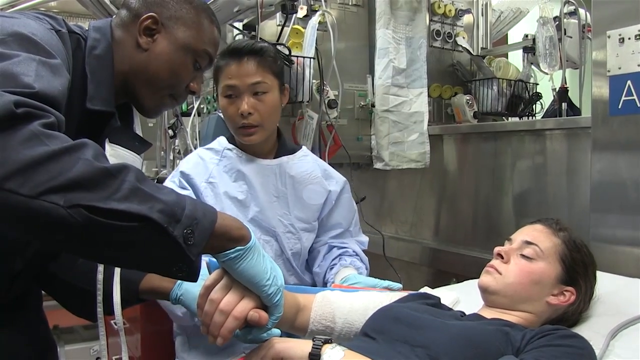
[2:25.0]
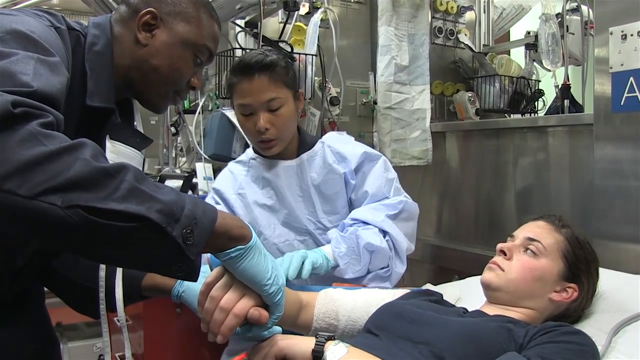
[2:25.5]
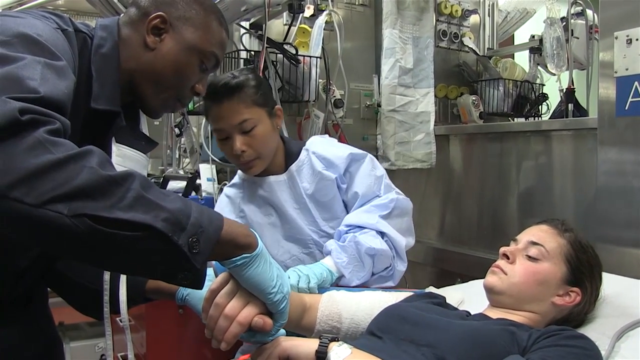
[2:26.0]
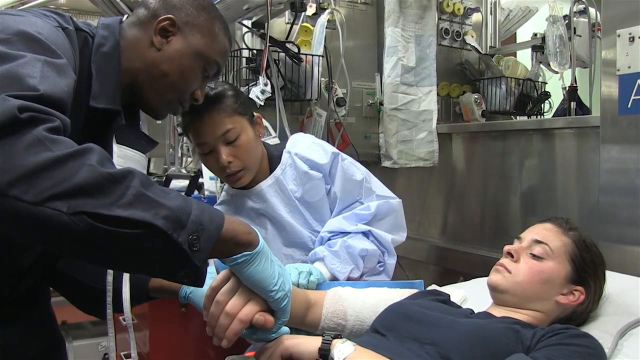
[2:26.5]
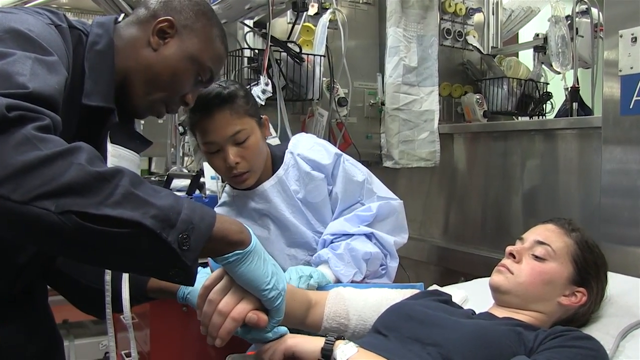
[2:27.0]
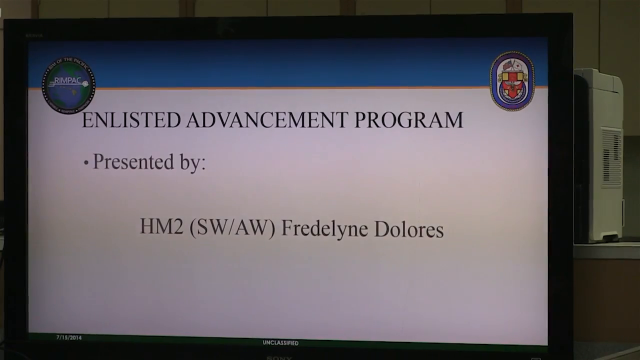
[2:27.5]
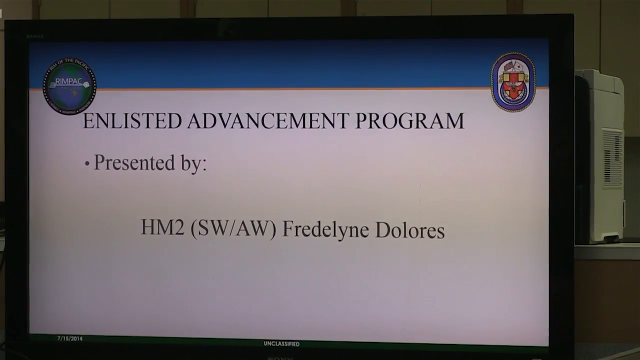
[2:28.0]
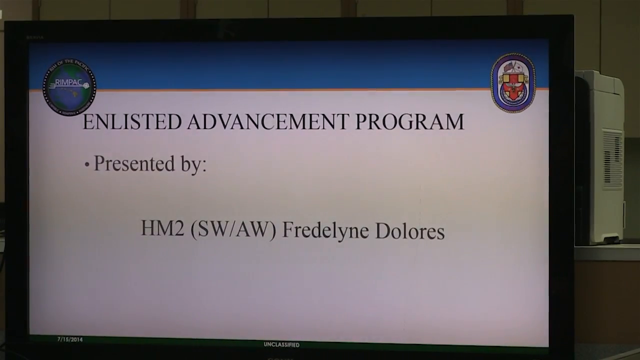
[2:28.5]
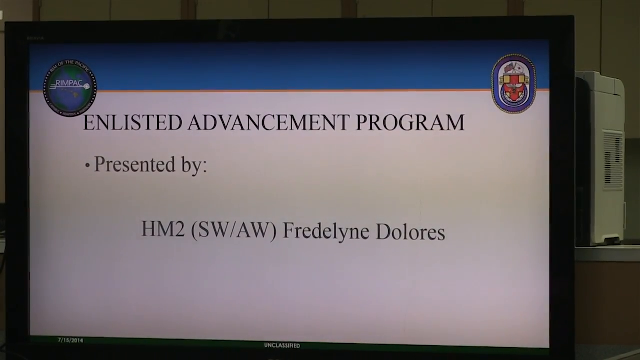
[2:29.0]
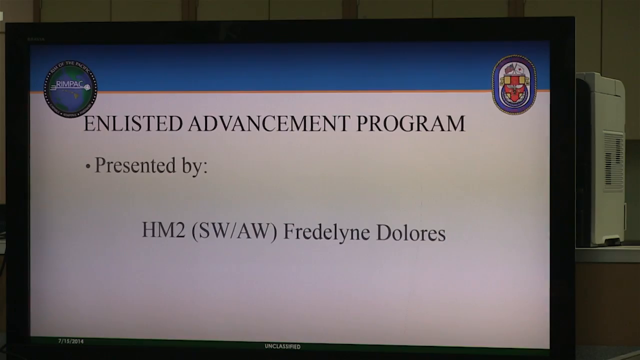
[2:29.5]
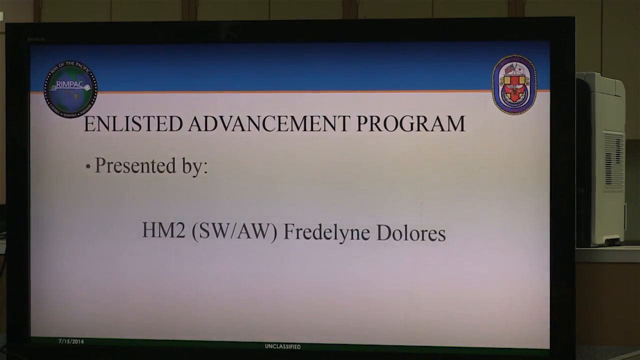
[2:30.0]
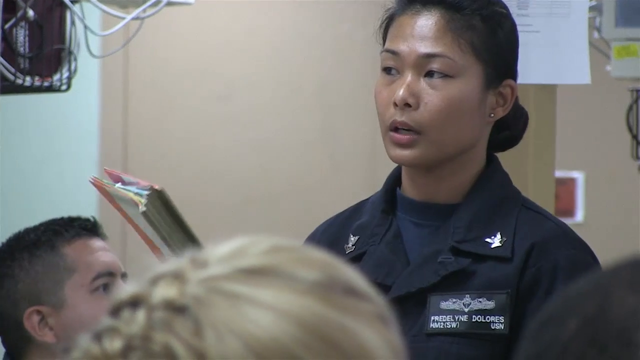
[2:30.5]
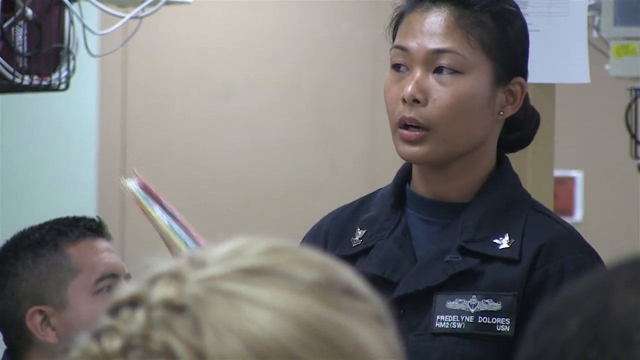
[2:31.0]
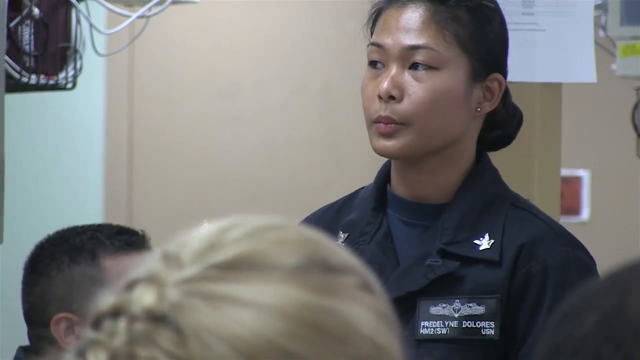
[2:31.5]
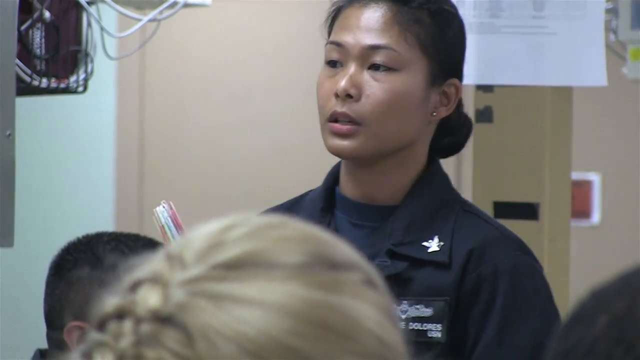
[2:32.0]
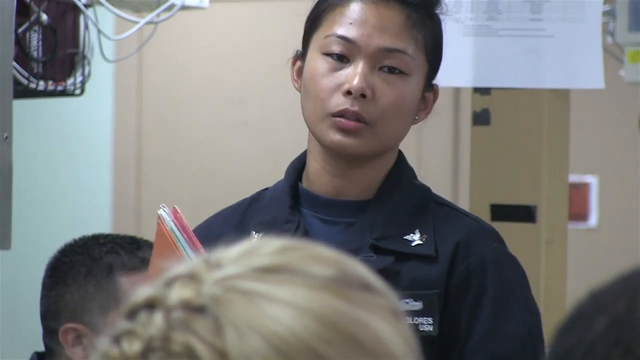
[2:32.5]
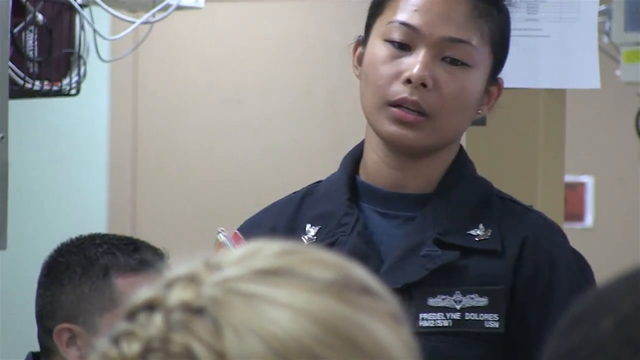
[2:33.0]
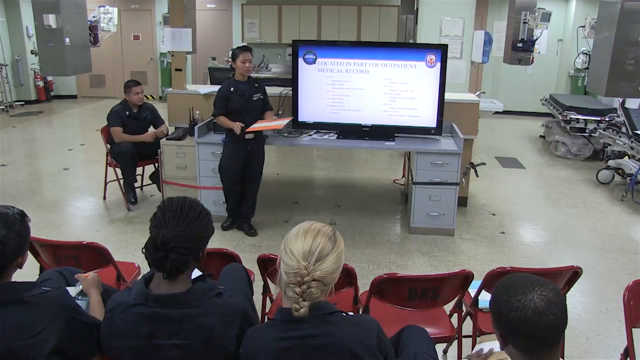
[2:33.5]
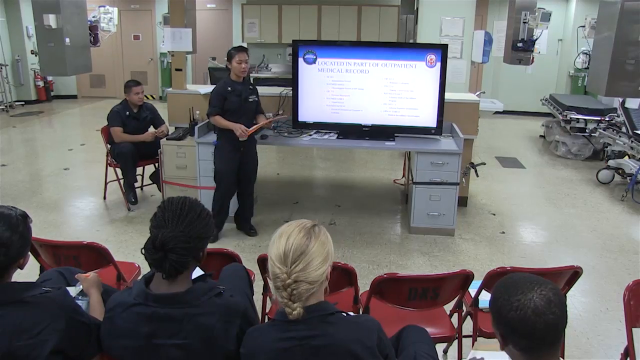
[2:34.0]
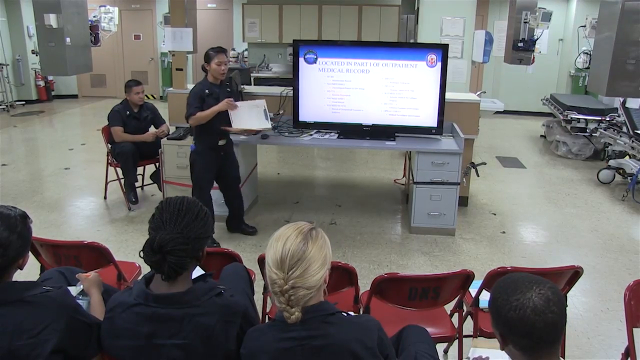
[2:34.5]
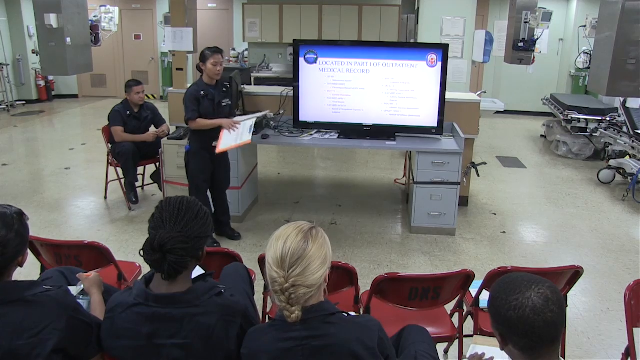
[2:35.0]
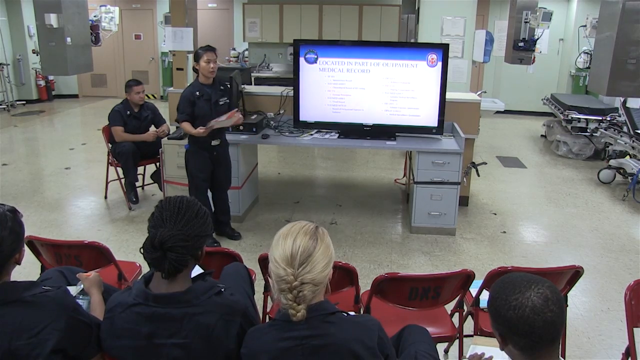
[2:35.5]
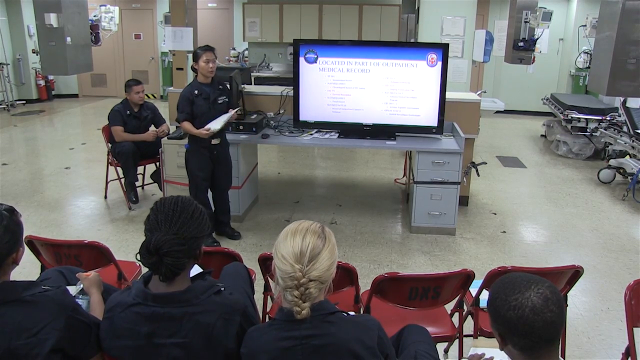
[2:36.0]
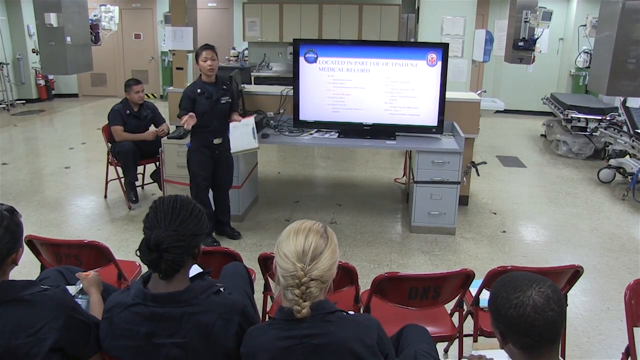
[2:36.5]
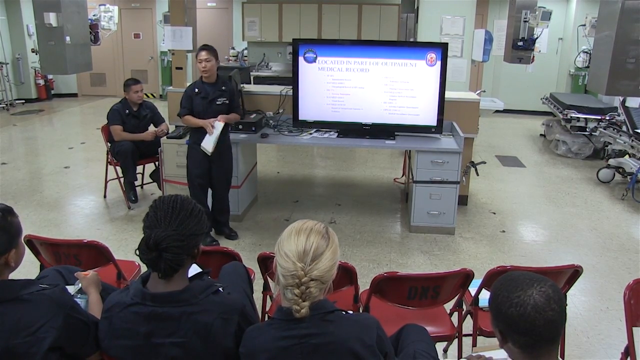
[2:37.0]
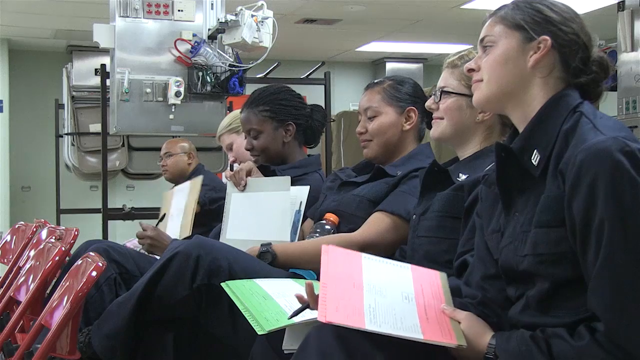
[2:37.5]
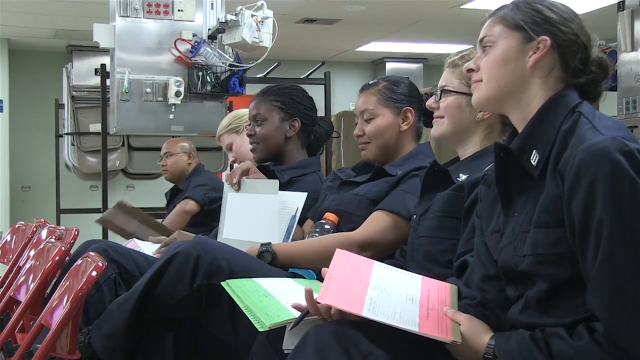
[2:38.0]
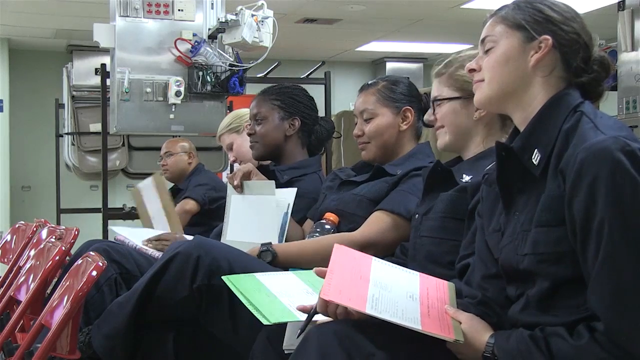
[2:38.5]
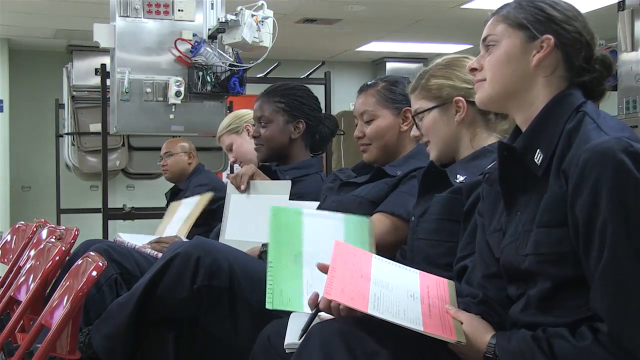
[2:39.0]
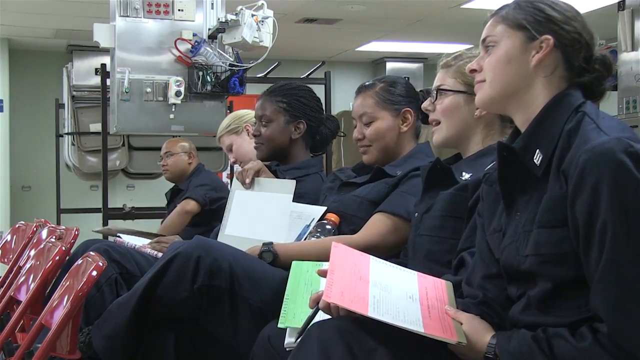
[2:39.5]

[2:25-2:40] The respiratory therapist works with Fredelyne Dolores on a patient, examining her arm. Fredelyne looks more at the elbow, while the respiratory therapist holds the patient's hand, cupping it in both of his hands, and watches what Fredelyne is doing. A sign reads "enlisted advancement program presented by HM2 SW/AW Fredelyne Dolores". She is shown in front of five or six students, holding papers and standing in front of a TV screen, and seems to be giving some kind of training to the other medical staff.